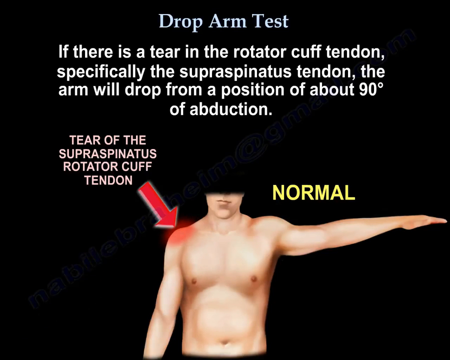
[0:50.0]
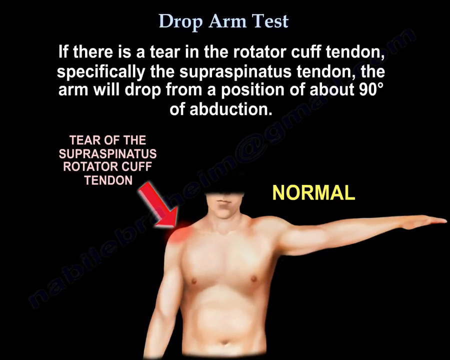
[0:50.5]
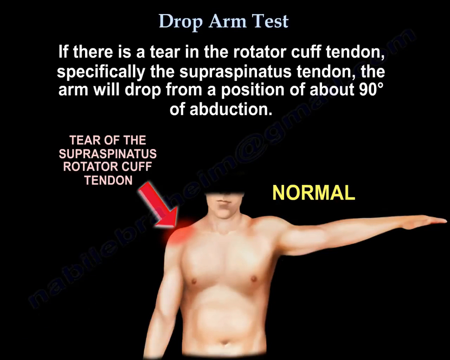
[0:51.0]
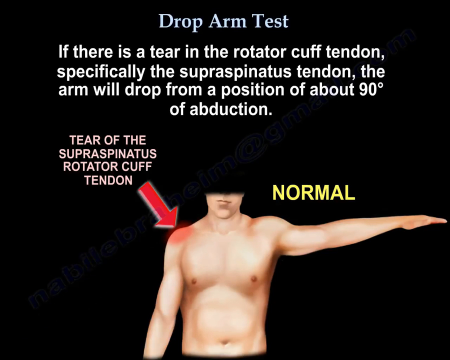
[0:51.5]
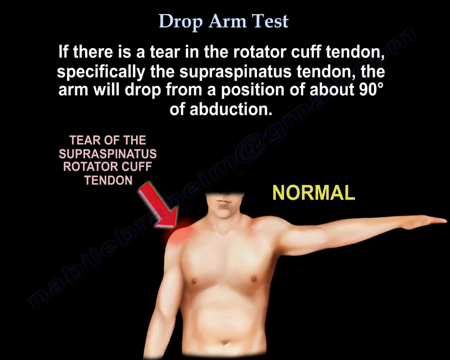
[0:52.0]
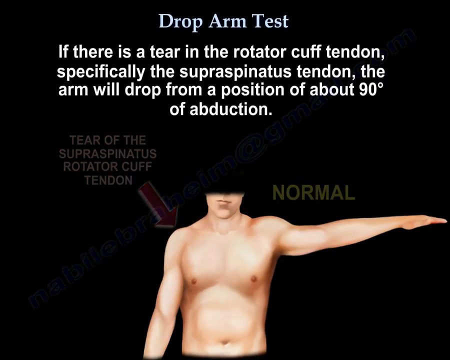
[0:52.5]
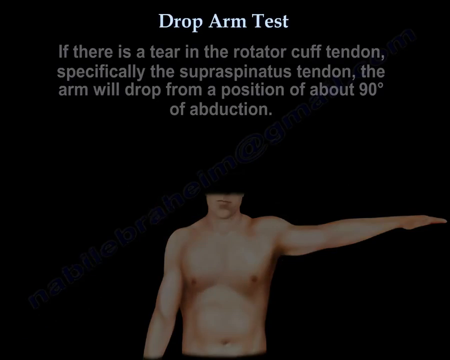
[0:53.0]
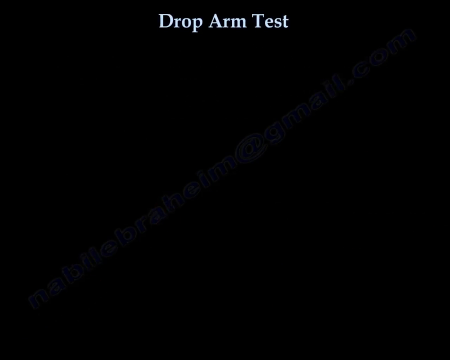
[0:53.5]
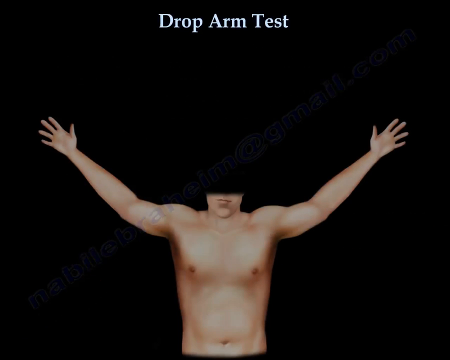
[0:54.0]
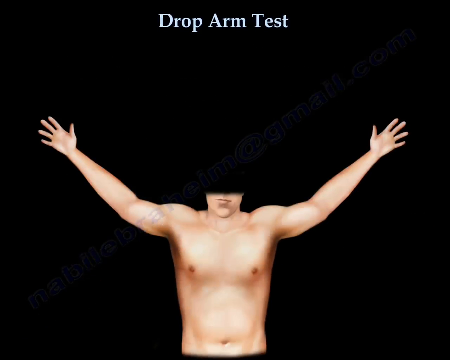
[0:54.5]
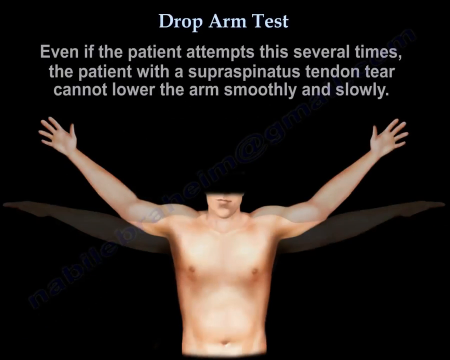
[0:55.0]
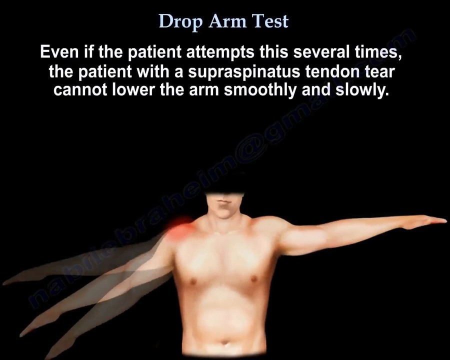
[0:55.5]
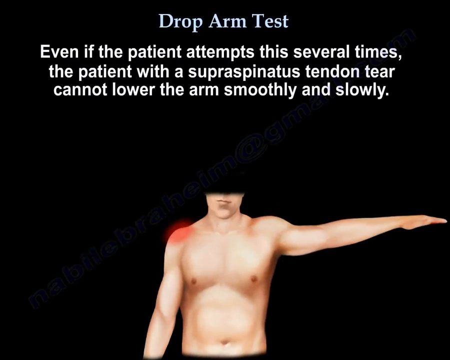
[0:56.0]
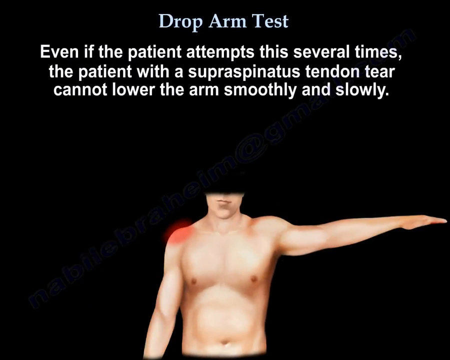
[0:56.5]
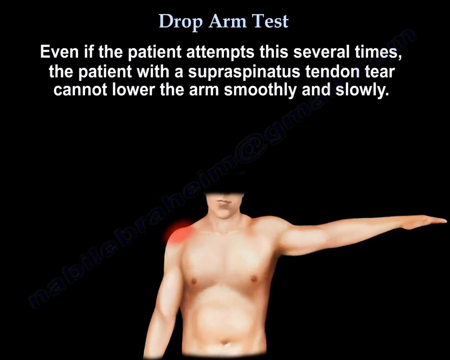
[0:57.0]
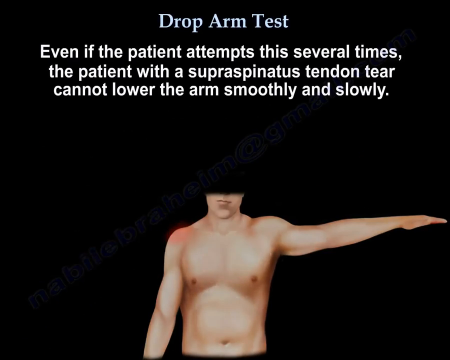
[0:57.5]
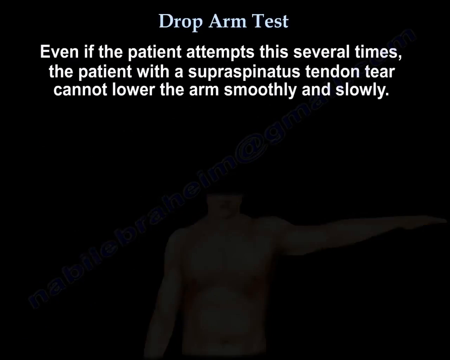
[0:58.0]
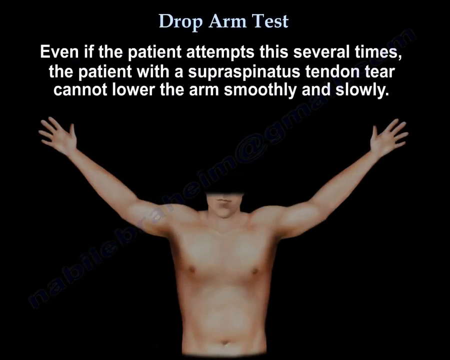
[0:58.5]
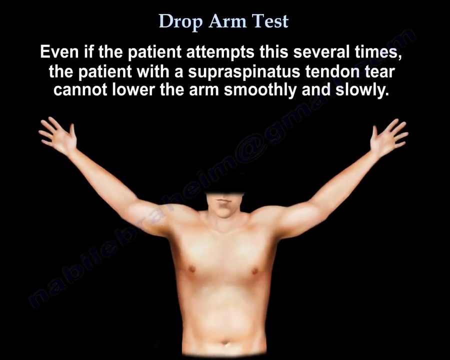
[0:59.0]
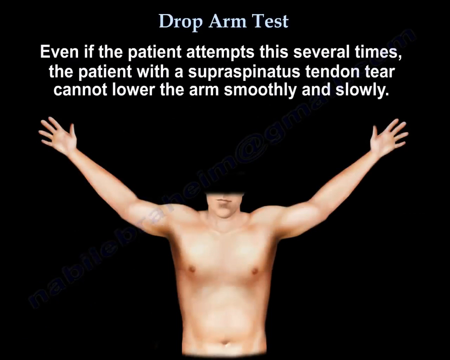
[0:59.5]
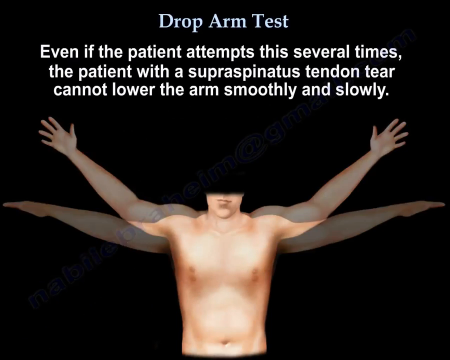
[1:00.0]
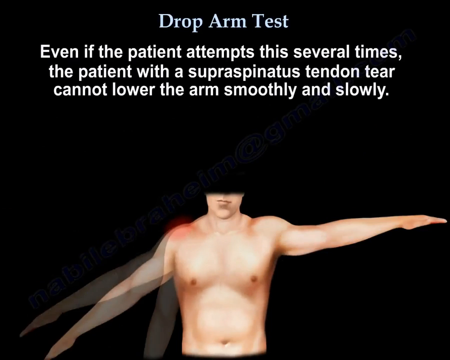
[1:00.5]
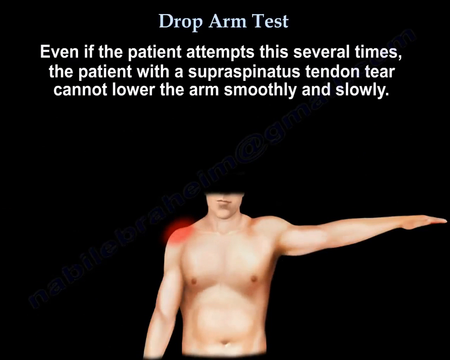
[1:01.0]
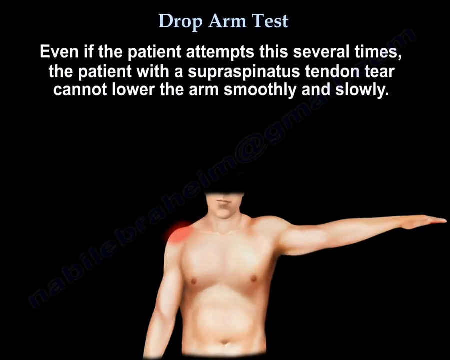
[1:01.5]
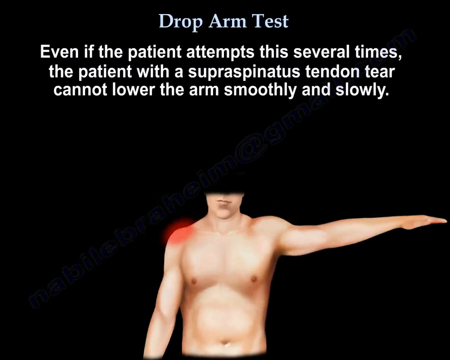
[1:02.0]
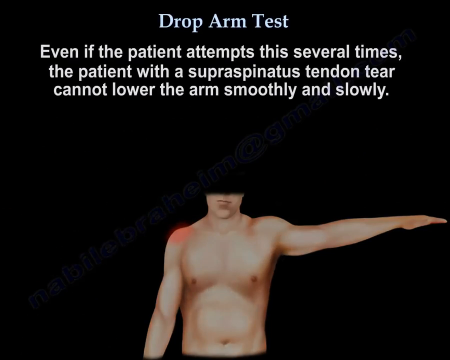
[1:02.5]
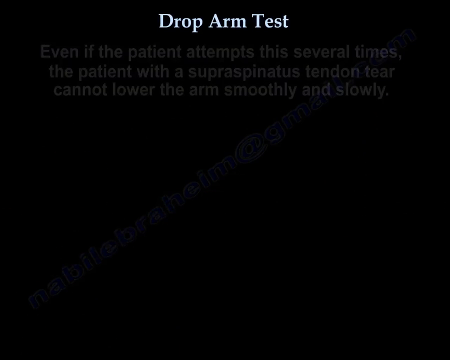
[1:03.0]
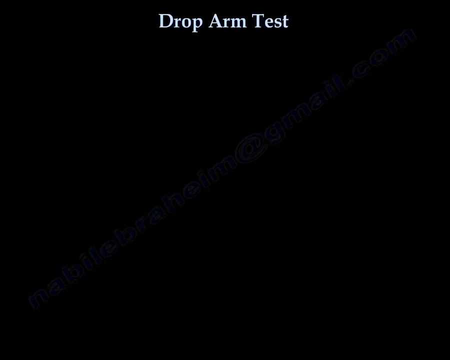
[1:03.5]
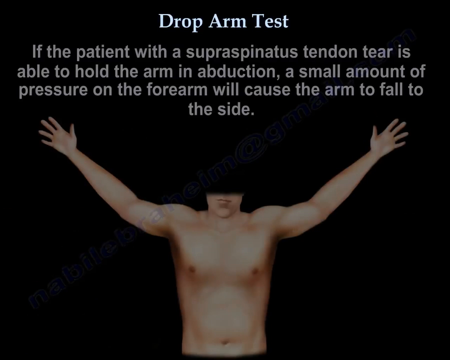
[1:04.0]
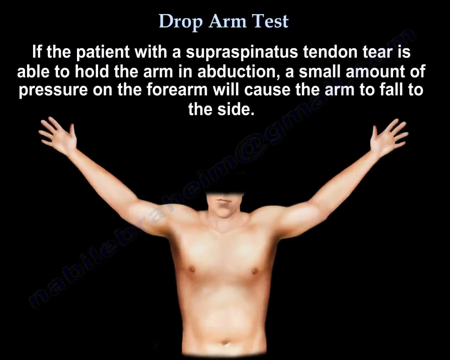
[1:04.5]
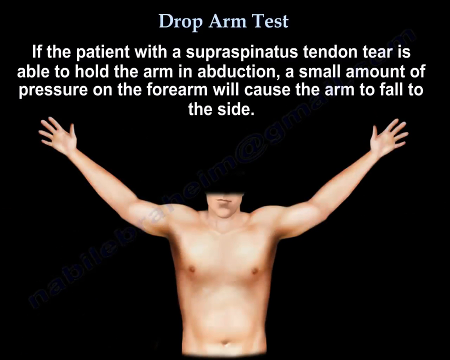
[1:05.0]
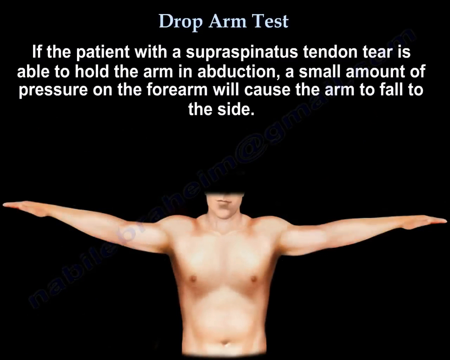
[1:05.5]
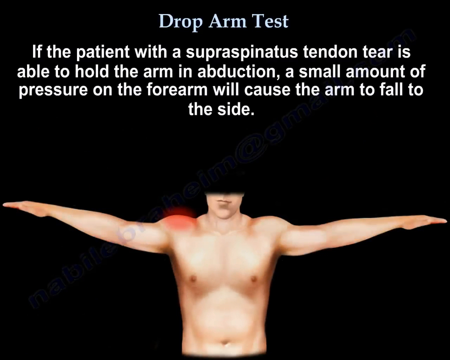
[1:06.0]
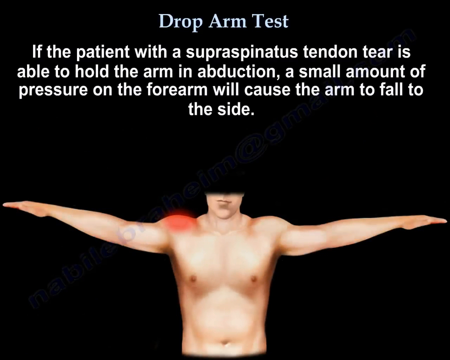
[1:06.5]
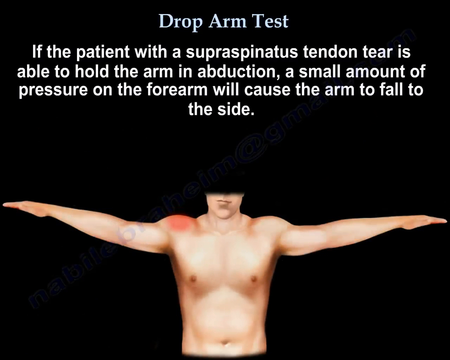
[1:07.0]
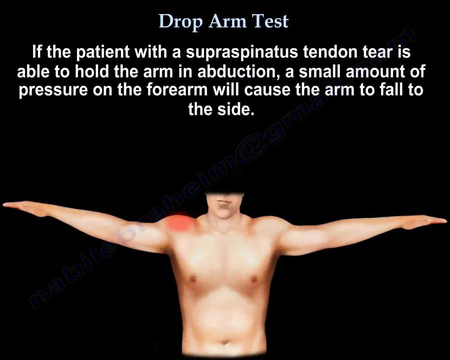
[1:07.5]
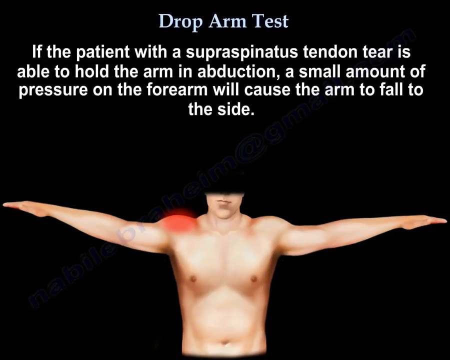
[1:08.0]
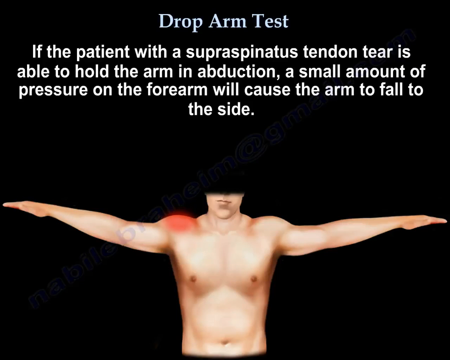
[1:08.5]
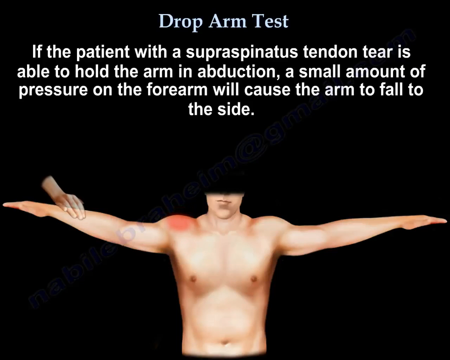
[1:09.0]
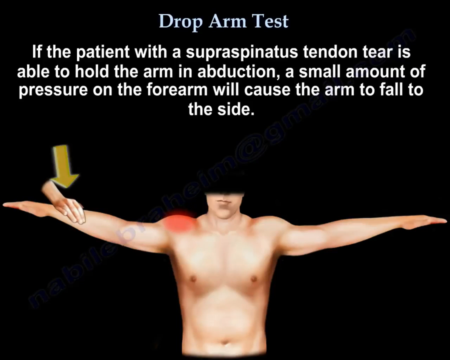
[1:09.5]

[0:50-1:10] The animation of the white, muscular man continues the drop arm test. Text says that if there is a tear in the rotator cuff tendon, especially the supraspinatus tendon, the arm will drop from the position of 90 degrees of abduction. The other arm is normal, while the affected right arm shows inflammation, with an arrow pointing to that shoulder. The animation then shows both arms with no real writing, under the heading of the drop arm test, illustrating that even with several attempts, a patient with this tear cannot lower the arm smoothly, and that if the patient can hold the arm in abduction, a small amount of pressure on the forearm will cause the arm to fall to the side. The background is still black, and everything is animated.